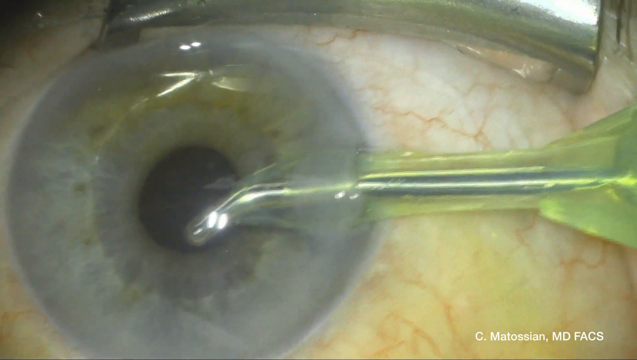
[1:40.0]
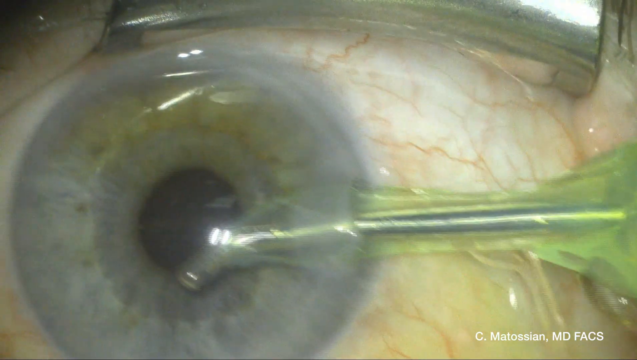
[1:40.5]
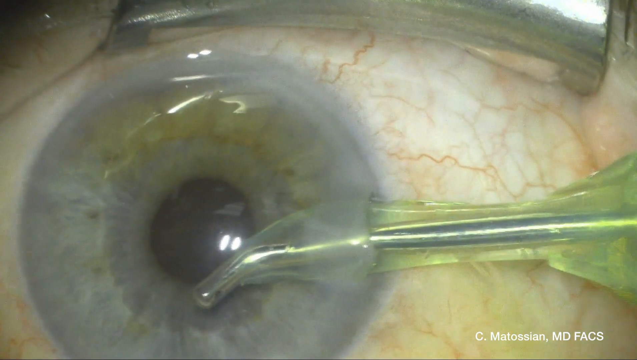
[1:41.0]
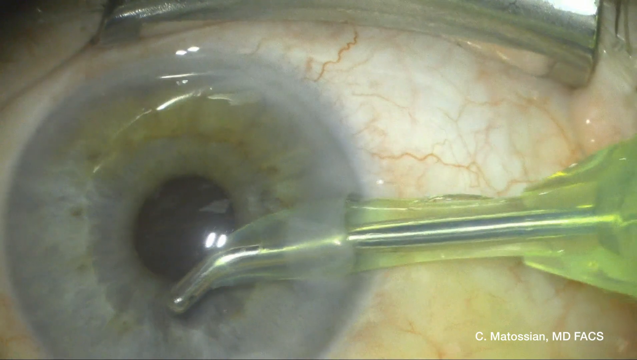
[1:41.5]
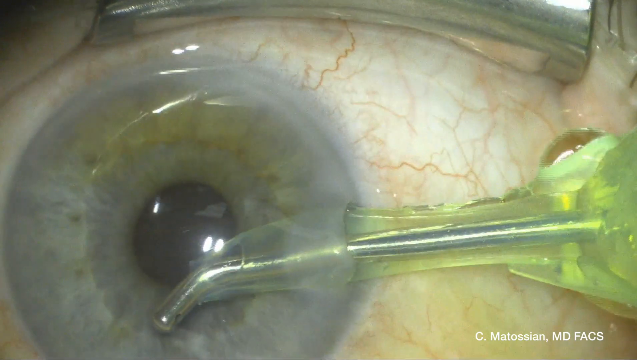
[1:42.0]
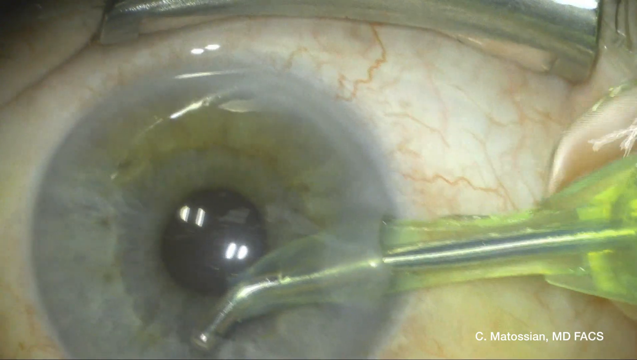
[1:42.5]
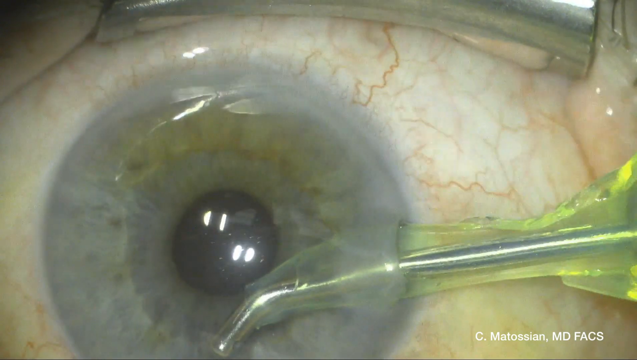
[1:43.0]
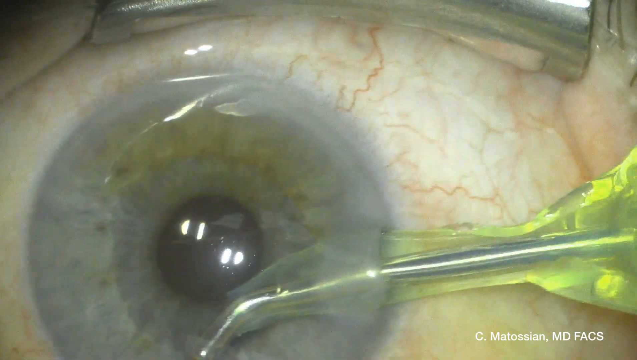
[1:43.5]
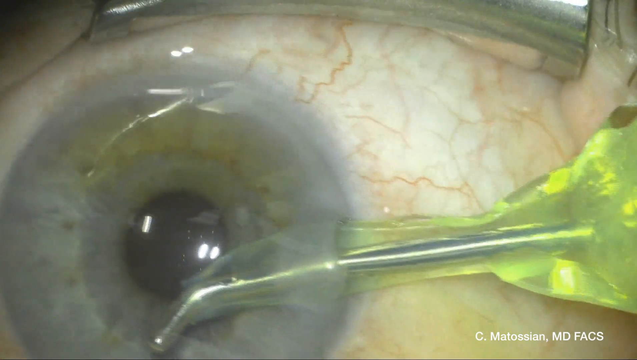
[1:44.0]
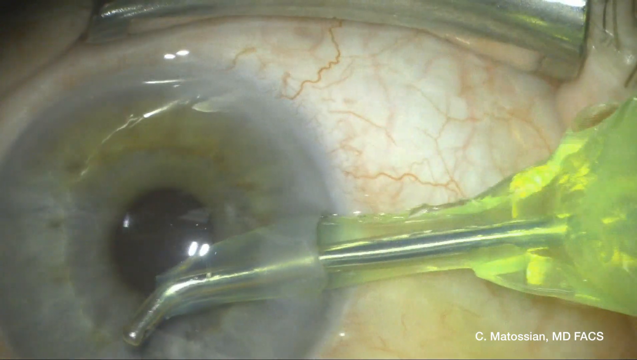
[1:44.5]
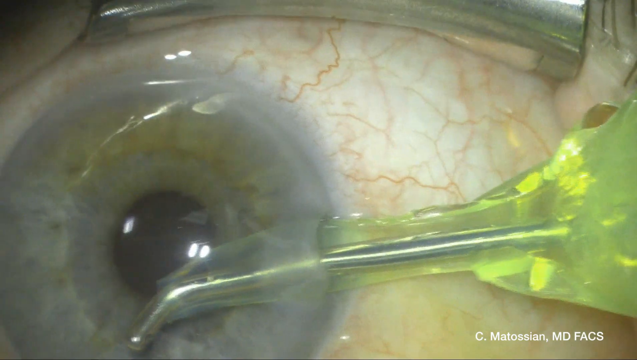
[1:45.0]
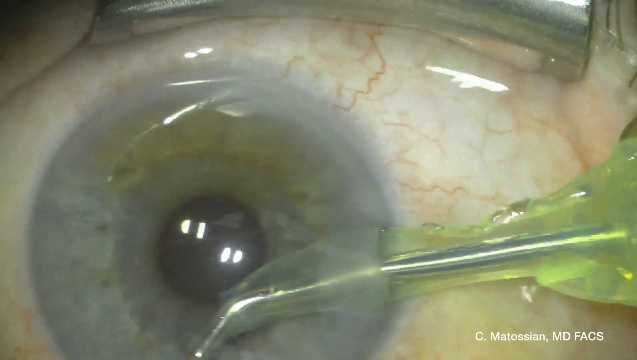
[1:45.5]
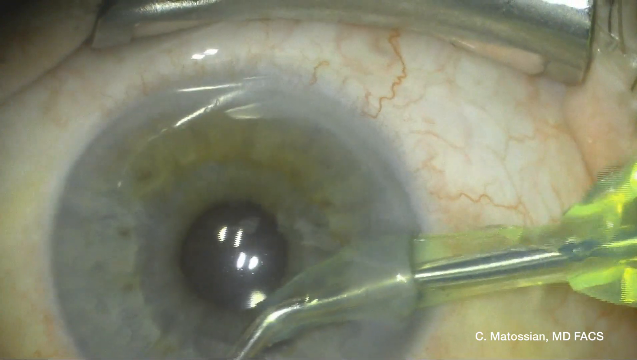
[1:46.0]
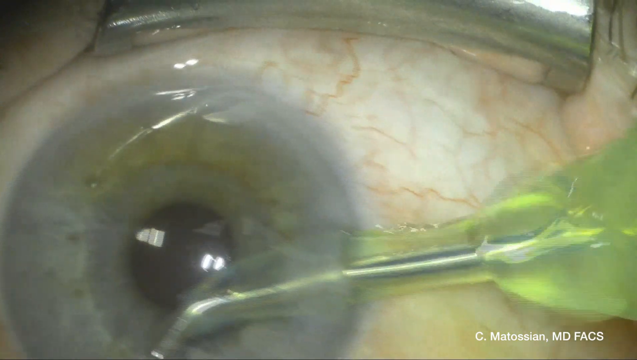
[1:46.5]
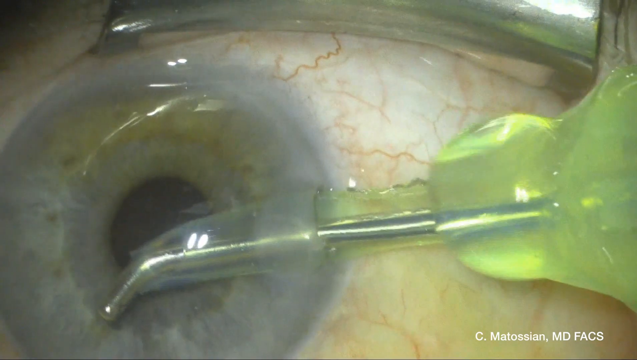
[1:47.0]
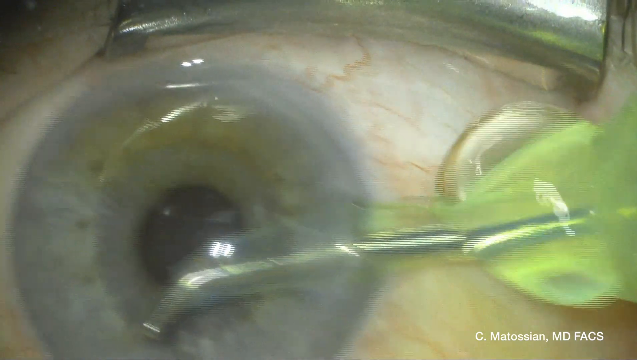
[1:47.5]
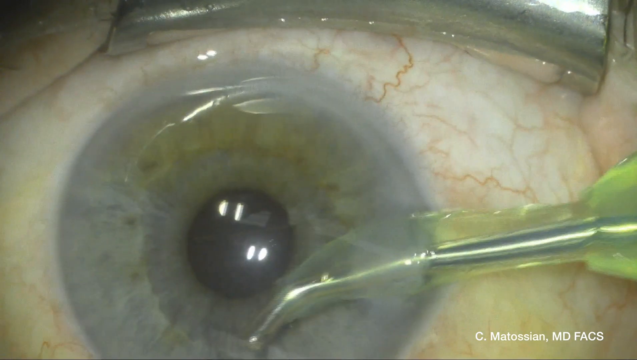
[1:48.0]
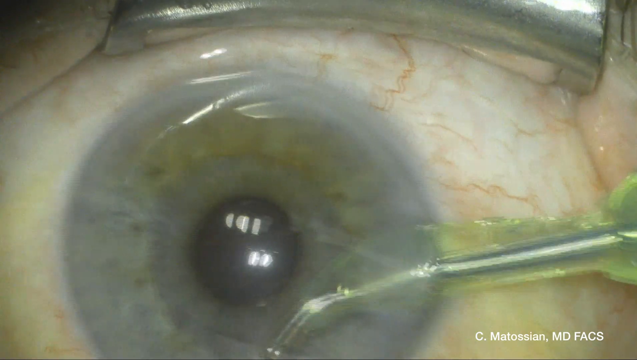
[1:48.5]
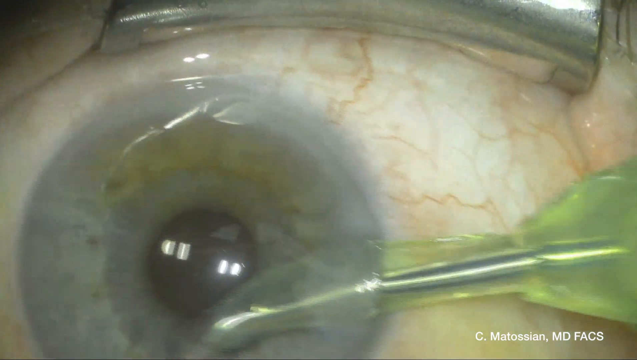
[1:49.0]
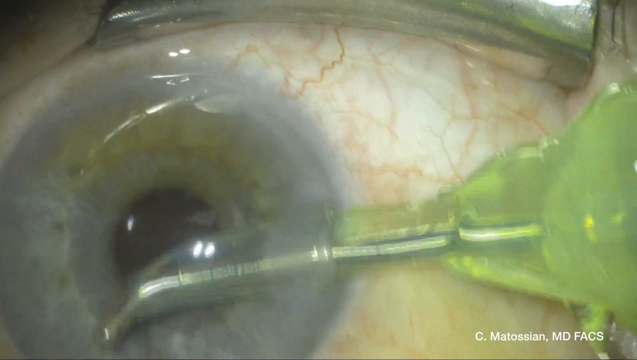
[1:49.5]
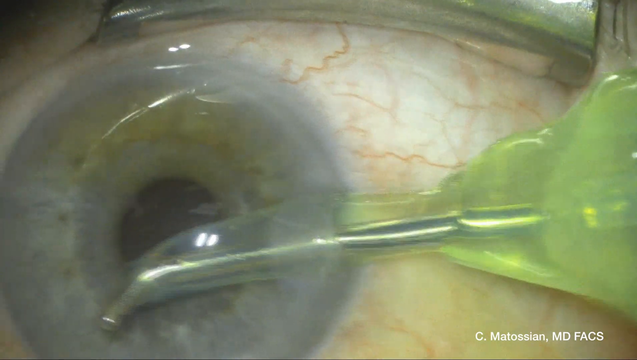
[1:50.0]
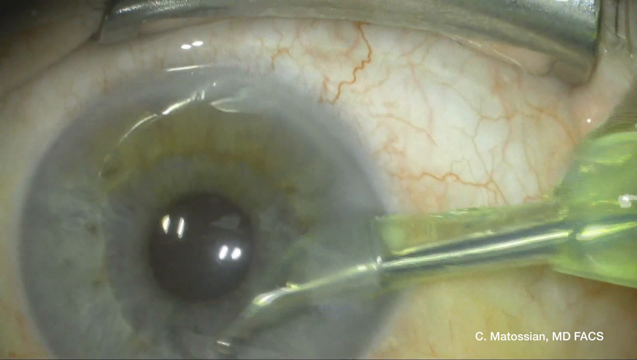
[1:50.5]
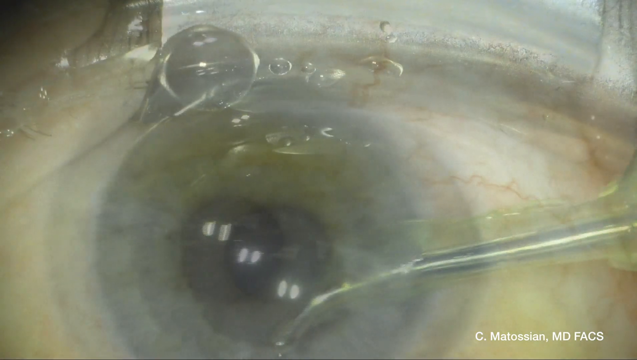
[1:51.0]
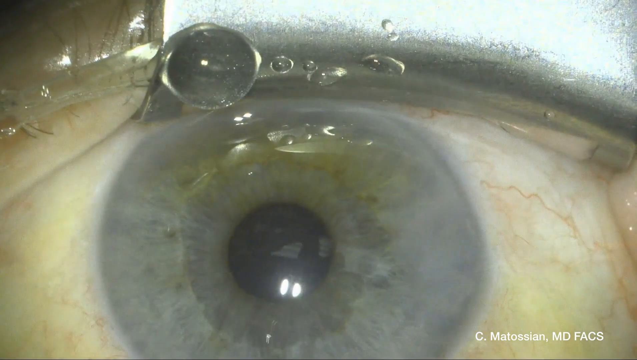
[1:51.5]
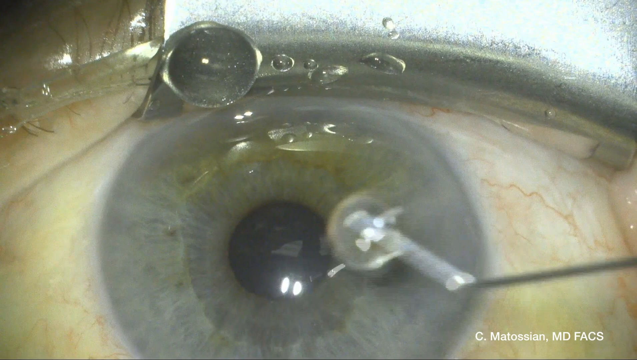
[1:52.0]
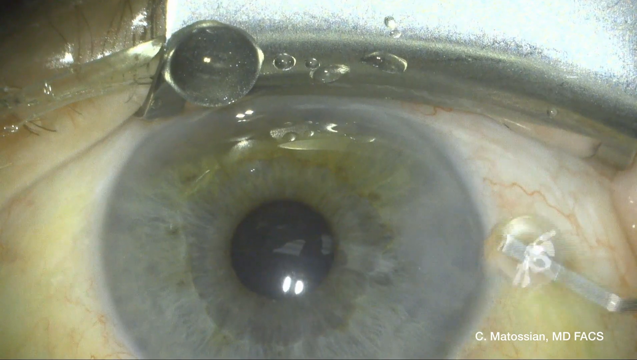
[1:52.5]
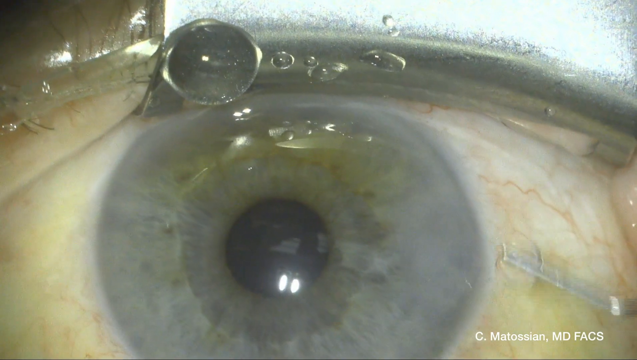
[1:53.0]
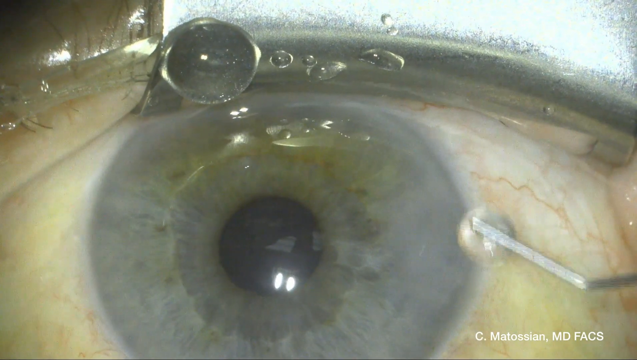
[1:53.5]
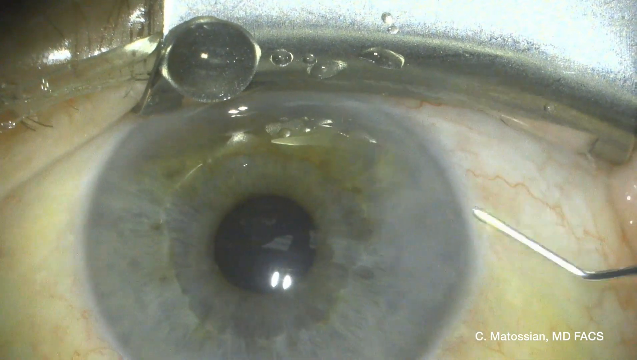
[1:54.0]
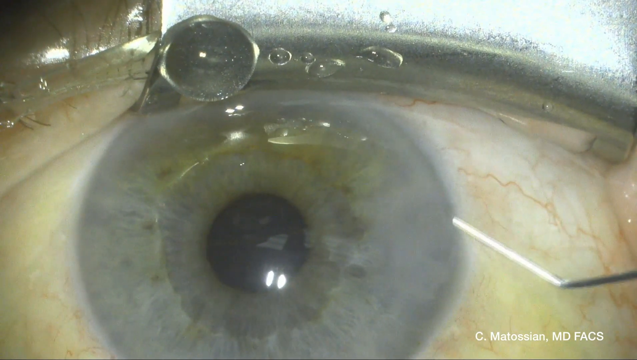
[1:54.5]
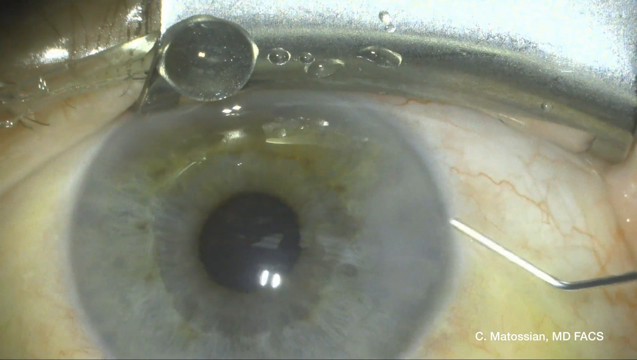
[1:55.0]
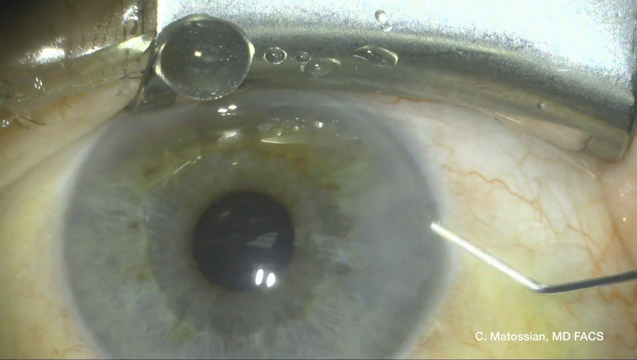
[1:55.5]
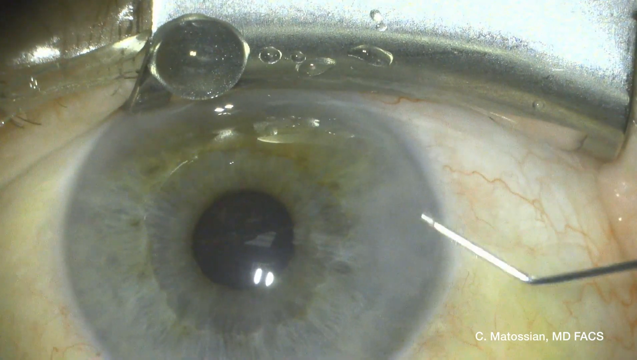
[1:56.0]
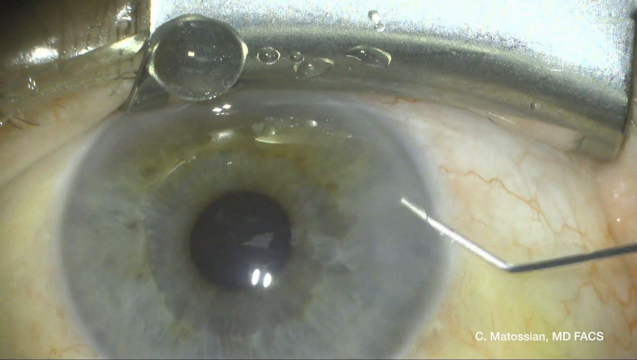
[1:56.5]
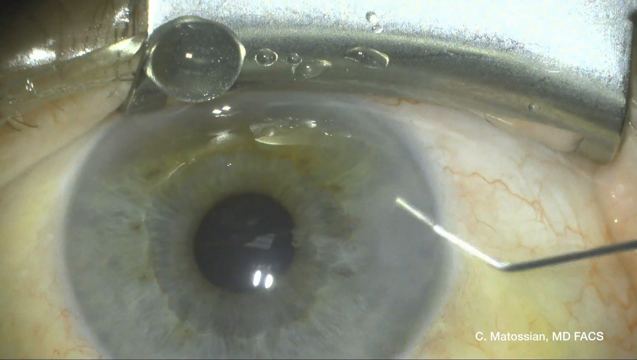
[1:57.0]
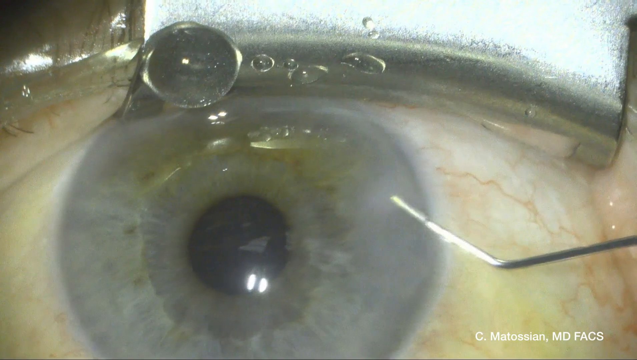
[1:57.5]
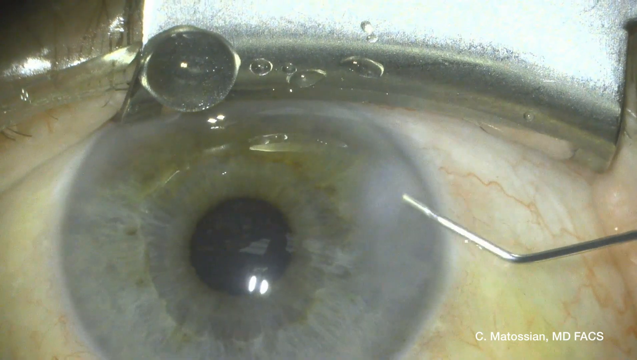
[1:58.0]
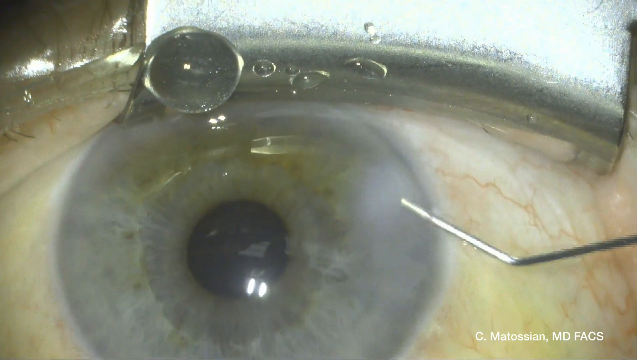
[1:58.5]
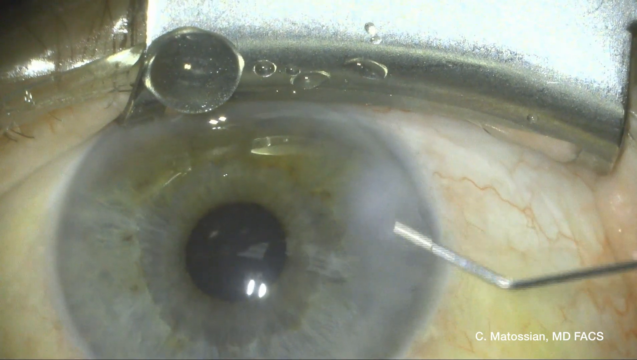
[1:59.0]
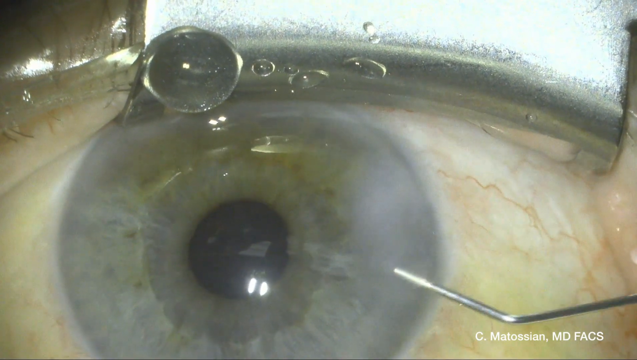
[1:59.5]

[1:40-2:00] A close-up shows an eye being operated on: the blue iris, the black pupil, the white sclera with red veins running through it, and a metal piece holding up the eyelid in the upper right corner. From the right side, a long, thin metallic tube colored in a yellow plastic or other substance is inserted under the right side of the eye, hovering over the black pupil. Liquid is transferred through the yellow part of the tube and balloons out of the top of the eye on the right side. Water is squirted out on the top of the eye to the left. The metallic piece is shoved to the left, moving the eye right and left each time it is shoved, then shoved again and pulled back. The view shifts to another angle above the eye, with a metallic piece holding back the eyelid in the upper right corner. A thin L-shaped metal needle is pressed over the eye, pushing water. A bubble of water expands and then pops. The metallic piece is inserted under the blue part of the eye and then dragged down.